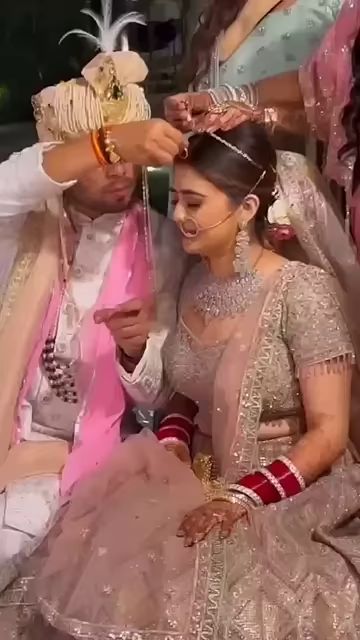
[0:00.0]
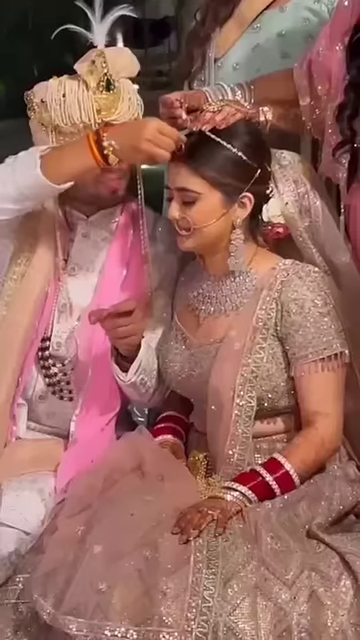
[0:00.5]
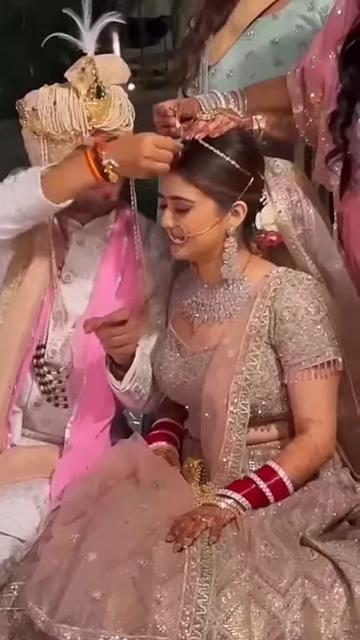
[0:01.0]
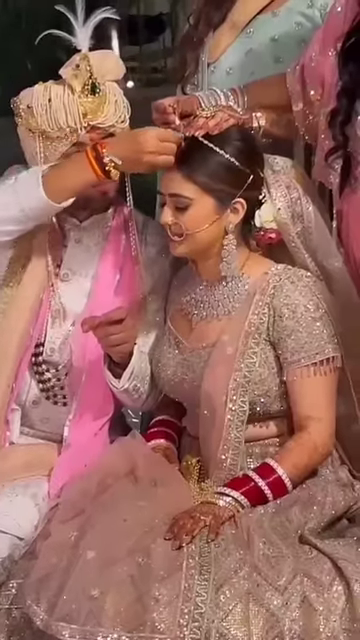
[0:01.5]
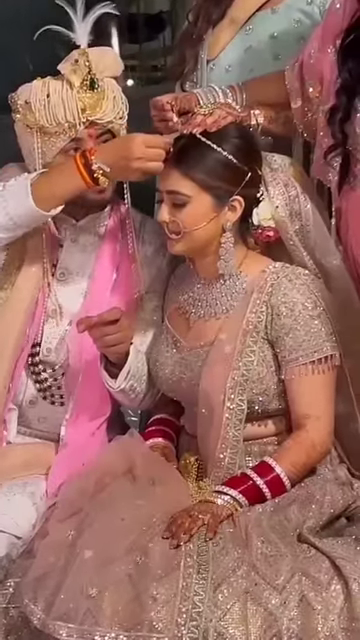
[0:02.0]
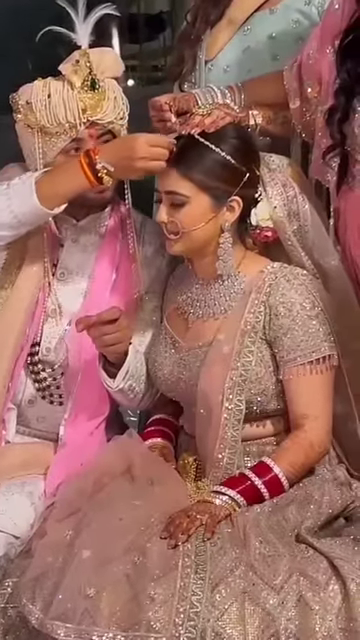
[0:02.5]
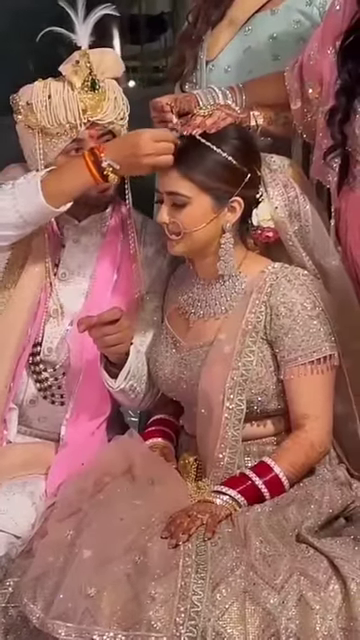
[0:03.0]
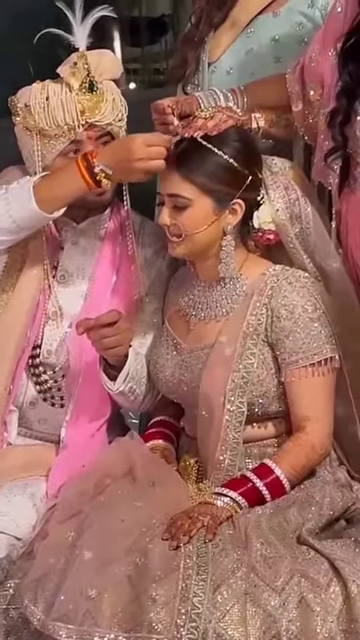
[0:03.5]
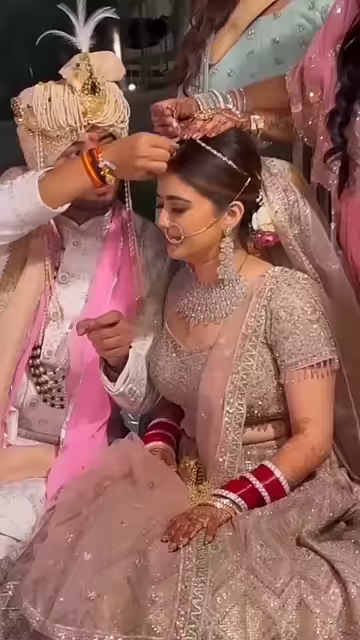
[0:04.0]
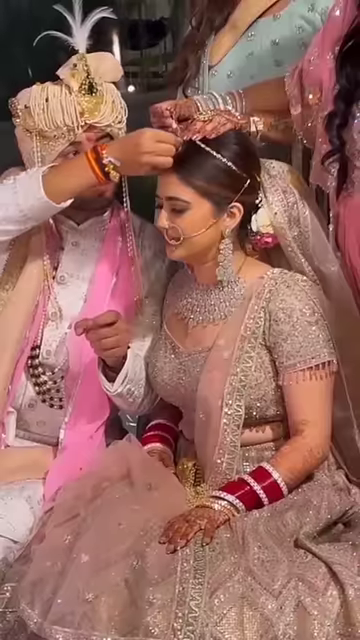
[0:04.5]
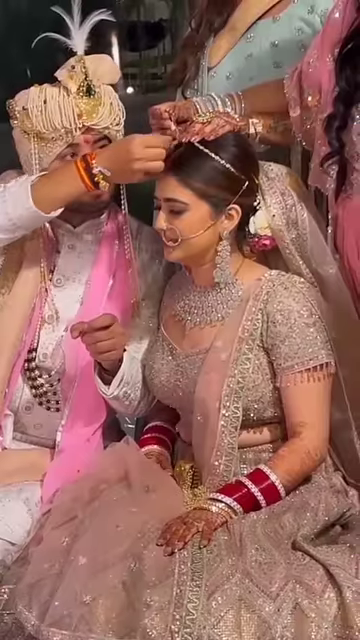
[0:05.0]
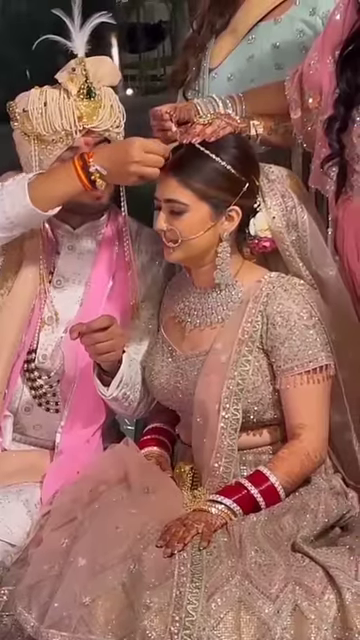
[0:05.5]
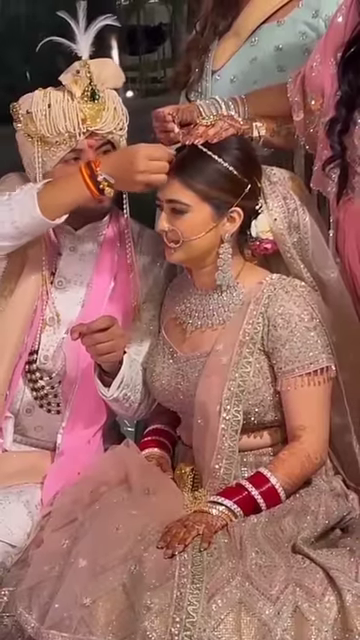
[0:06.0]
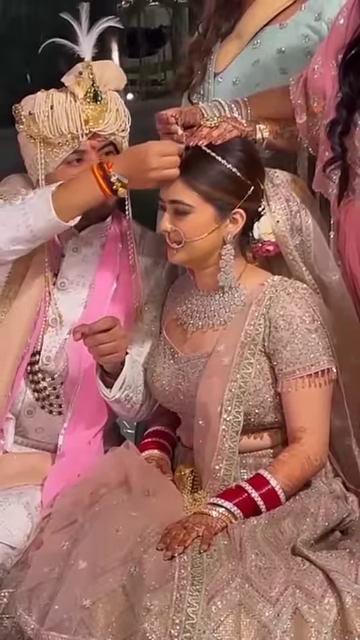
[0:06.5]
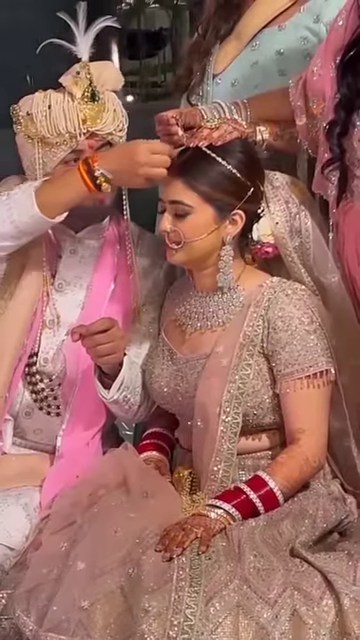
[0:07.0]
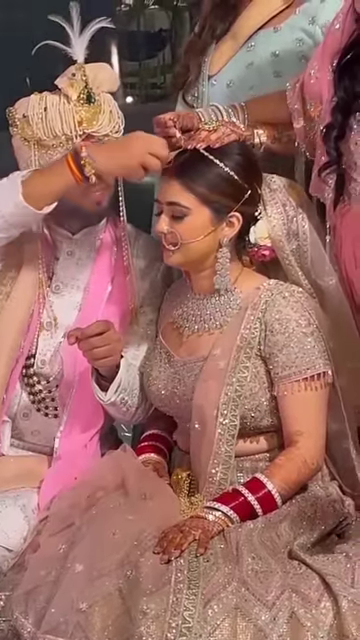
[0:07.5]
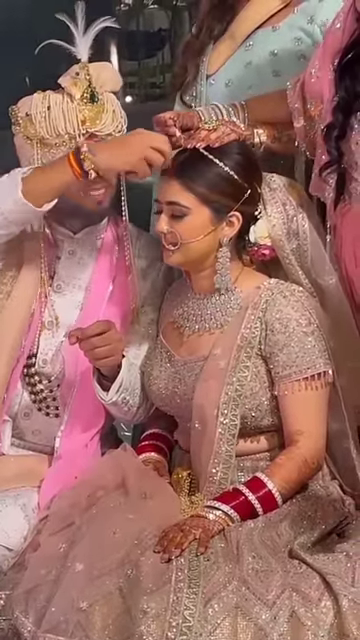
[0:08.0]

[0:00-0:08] A woman sits with a person on either side of her. On the left is a man wearing a turban, and on the right part of a woman in a pink dress is visible, with some of her hair showing and her hand above the head of the woman in the center. The woman in the center wears very ornate jewelry, a cropped shirt and a long skirt, along with red armbands on her arm. She also has a large nose ring that seems to be connected to a headpiece, which seems to be central to what is happening. The man makes a kind of sewing motion while the woman on the right holds her hand steady on the circlet around the central woman's head. It seems like a painful or painstaking process: the woman in the center sits very still, blinking slowly with a slight grimace on her face. None of them look directly at the person filming.